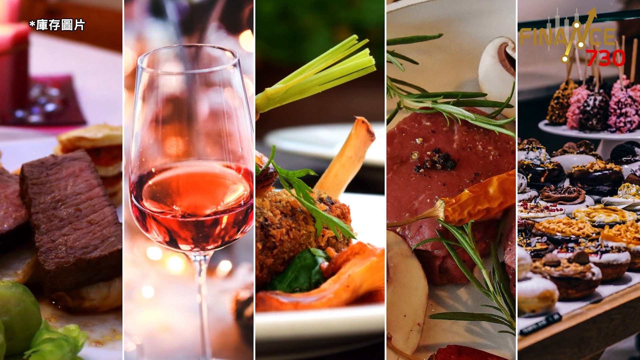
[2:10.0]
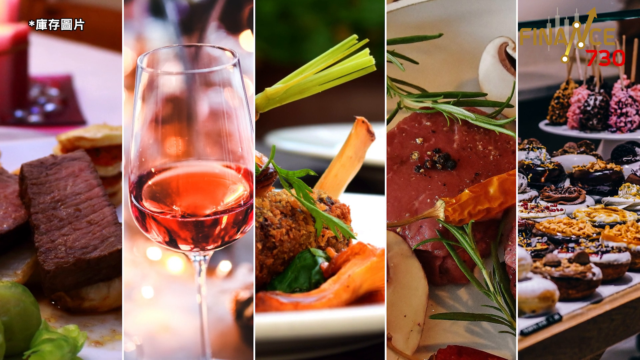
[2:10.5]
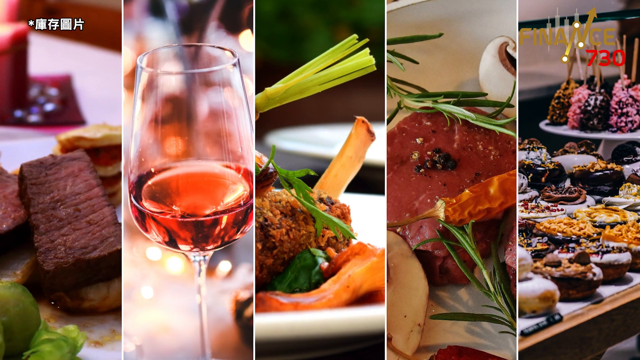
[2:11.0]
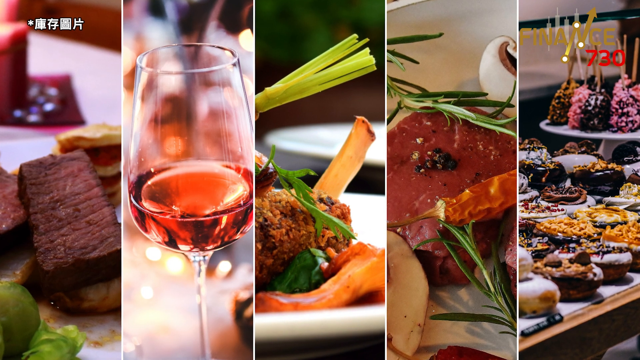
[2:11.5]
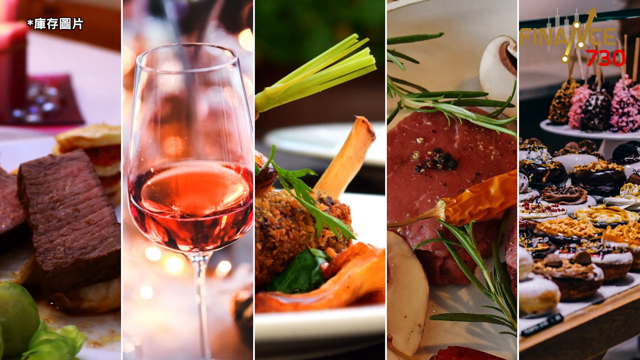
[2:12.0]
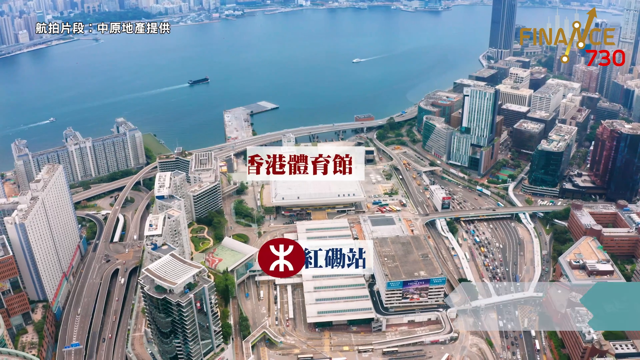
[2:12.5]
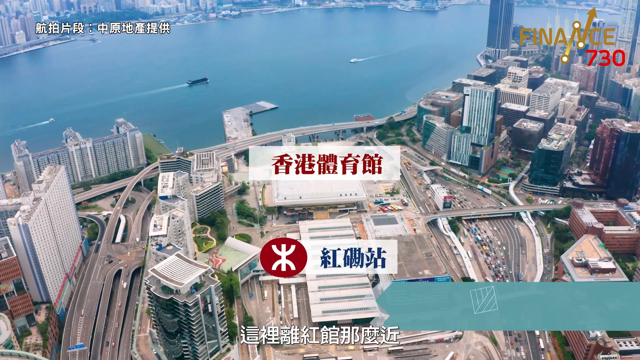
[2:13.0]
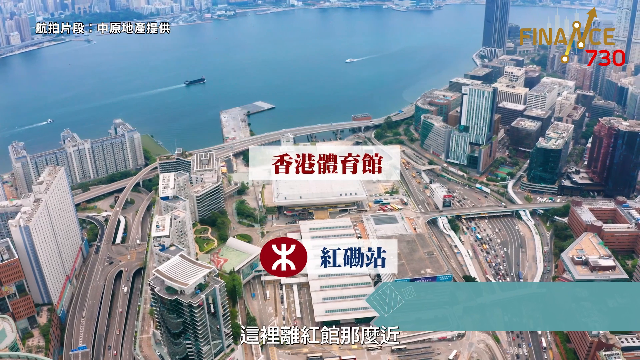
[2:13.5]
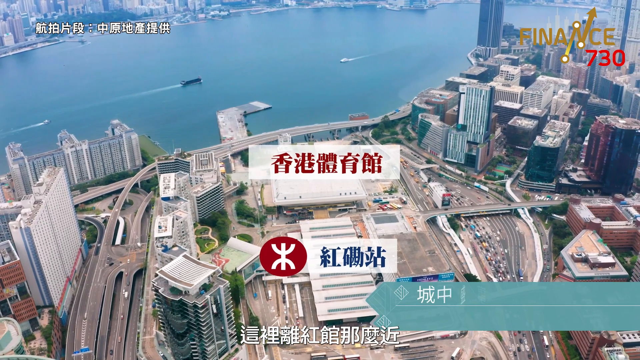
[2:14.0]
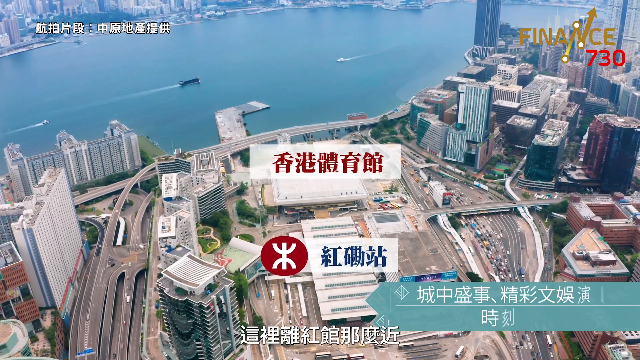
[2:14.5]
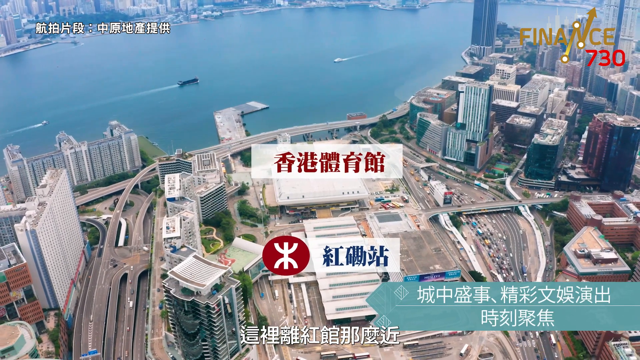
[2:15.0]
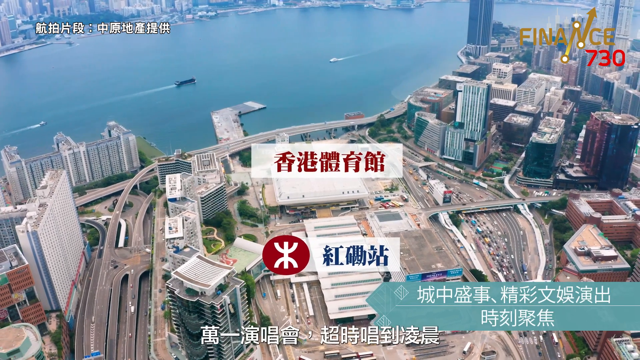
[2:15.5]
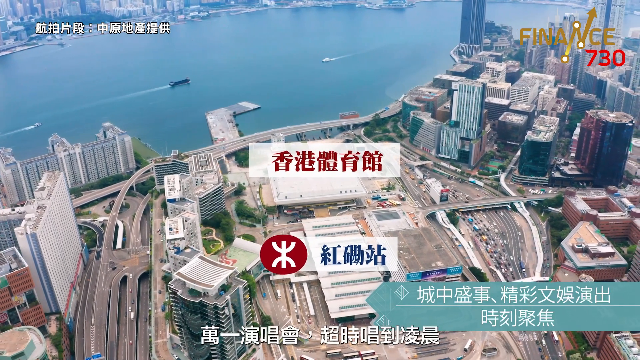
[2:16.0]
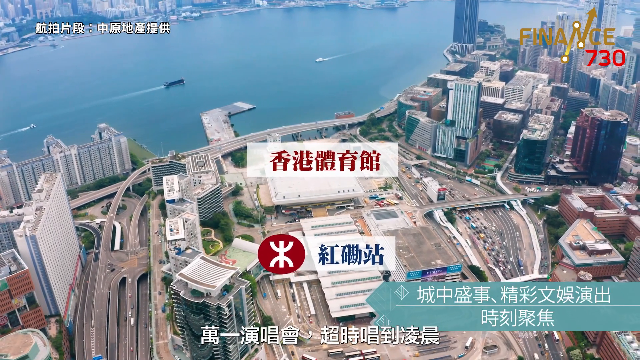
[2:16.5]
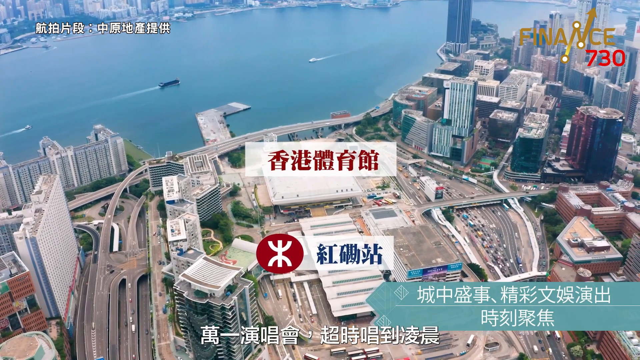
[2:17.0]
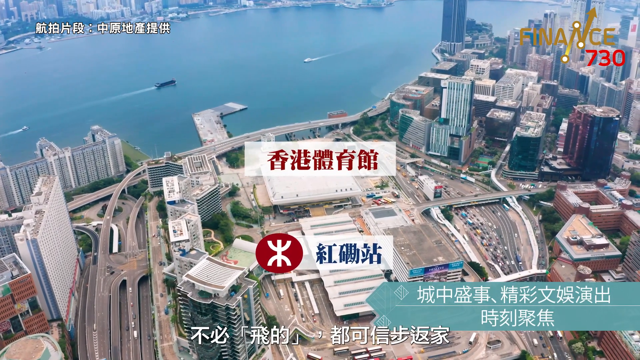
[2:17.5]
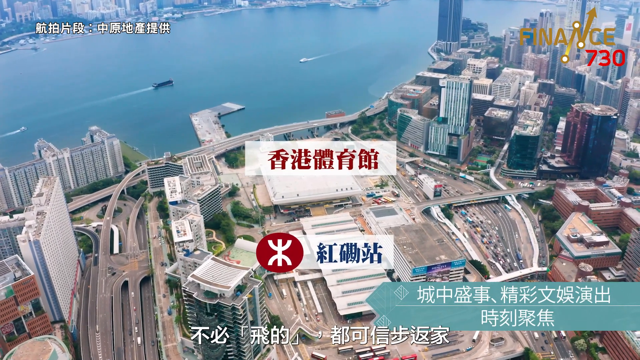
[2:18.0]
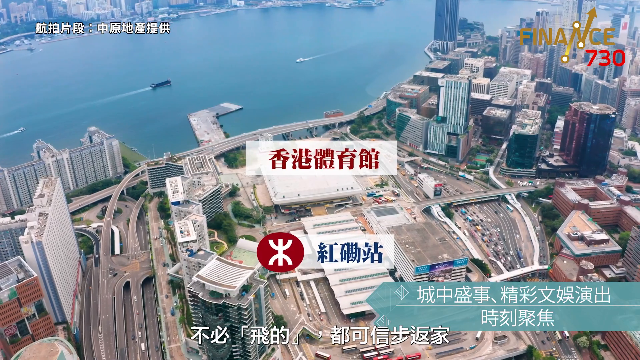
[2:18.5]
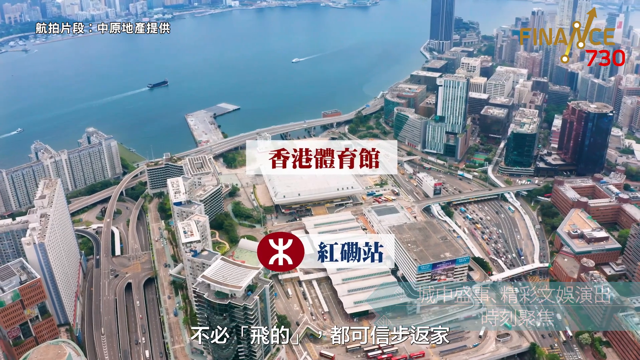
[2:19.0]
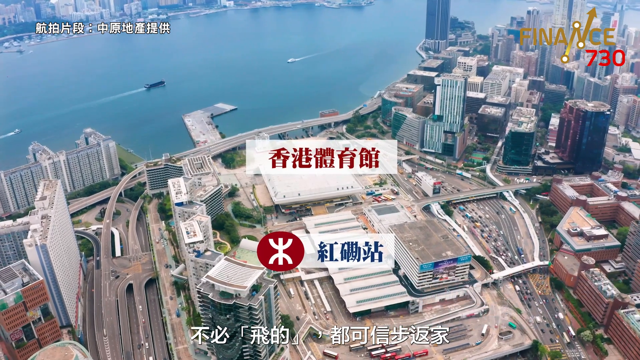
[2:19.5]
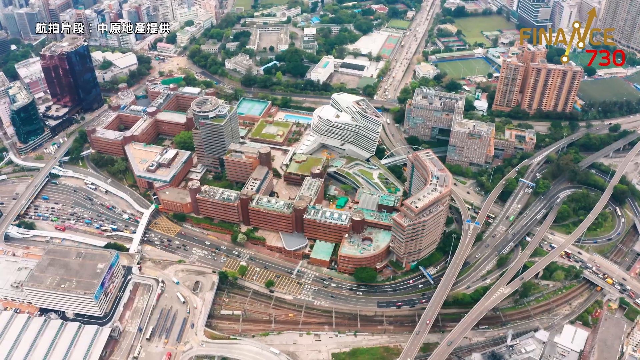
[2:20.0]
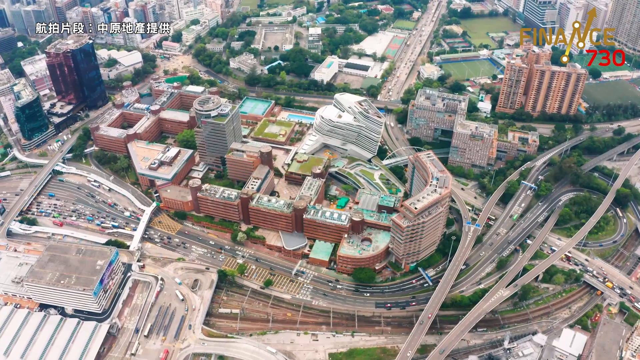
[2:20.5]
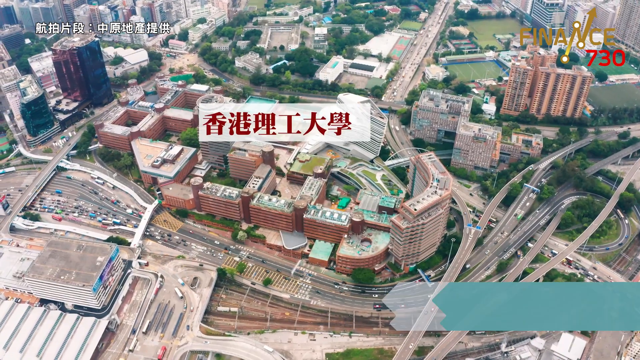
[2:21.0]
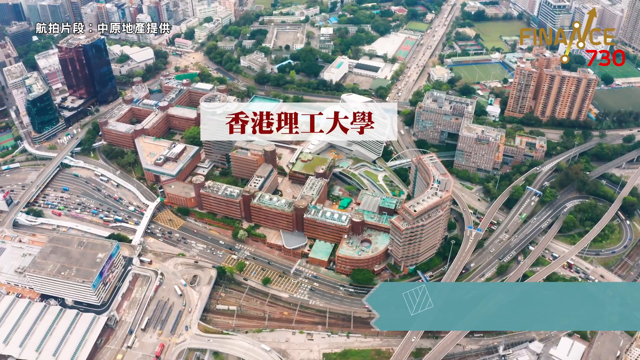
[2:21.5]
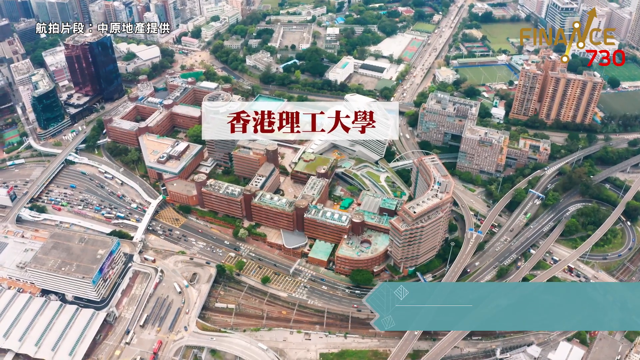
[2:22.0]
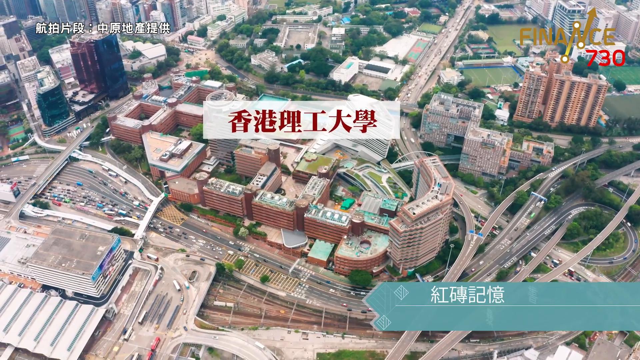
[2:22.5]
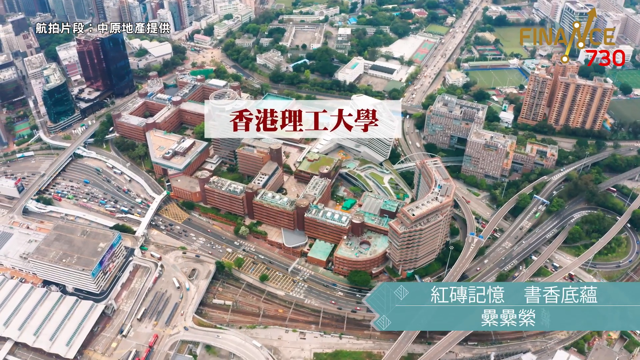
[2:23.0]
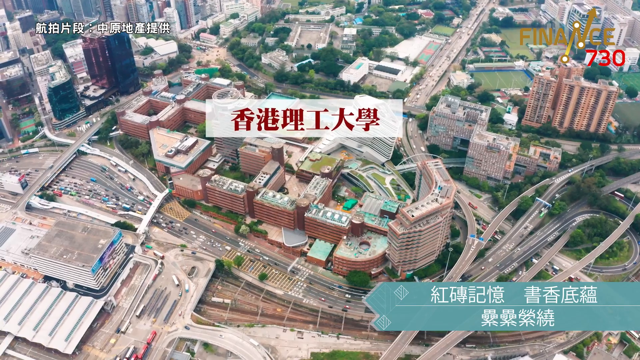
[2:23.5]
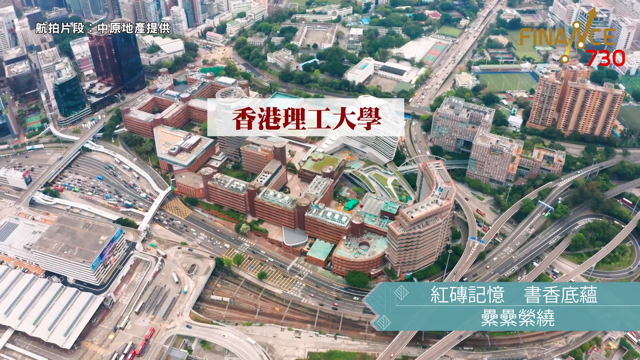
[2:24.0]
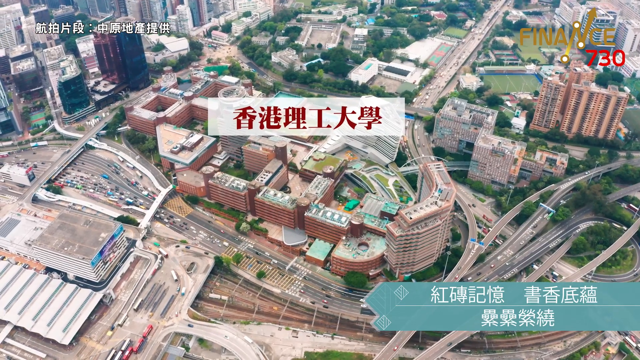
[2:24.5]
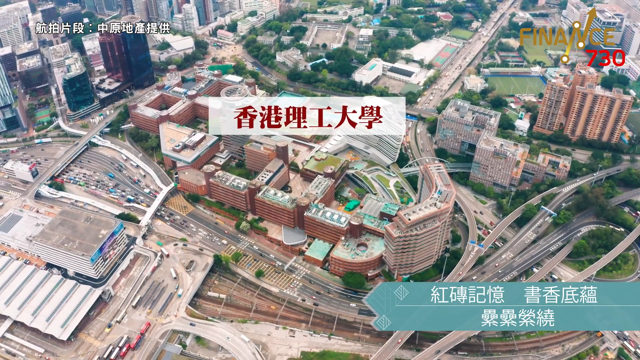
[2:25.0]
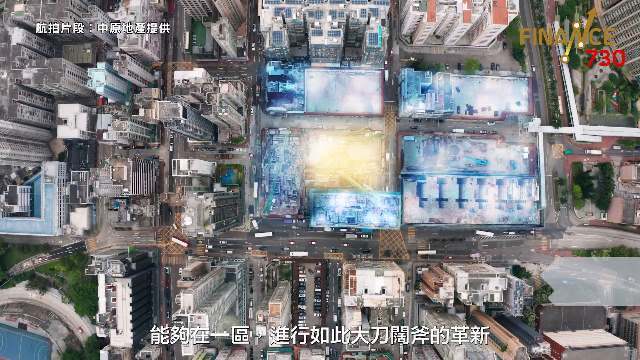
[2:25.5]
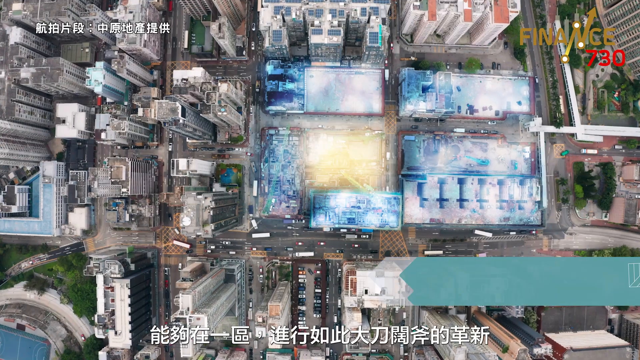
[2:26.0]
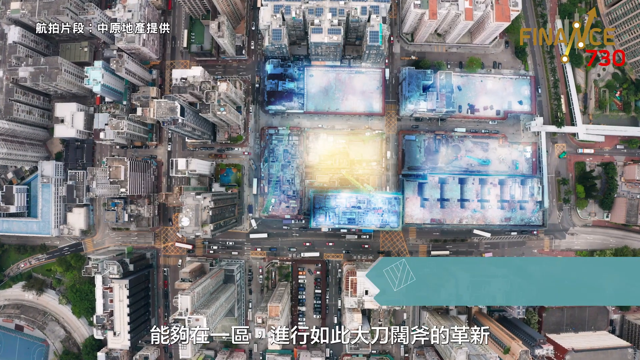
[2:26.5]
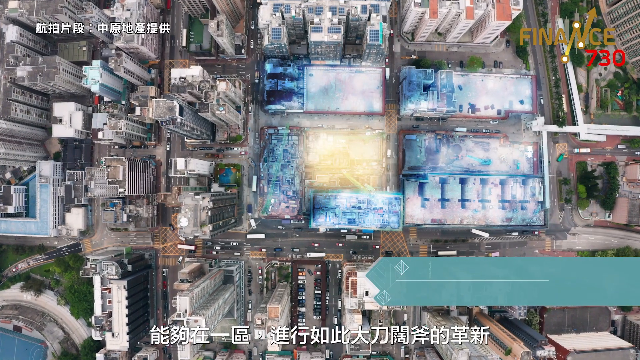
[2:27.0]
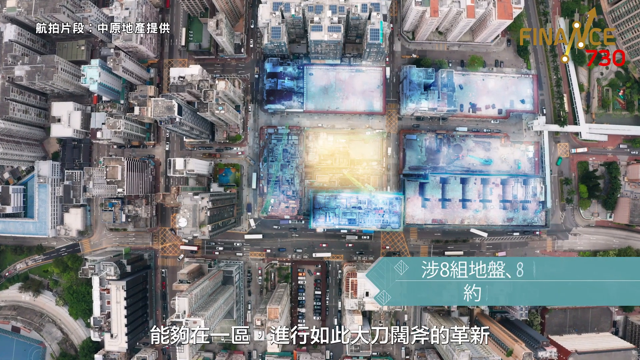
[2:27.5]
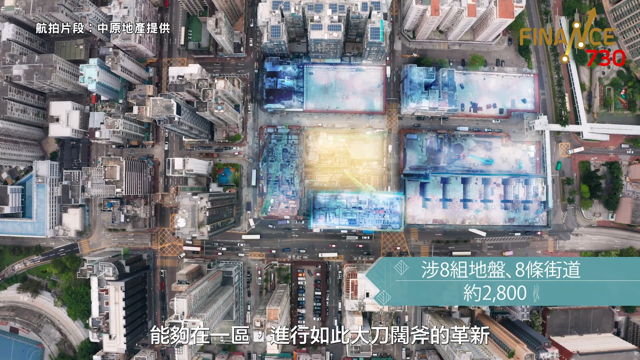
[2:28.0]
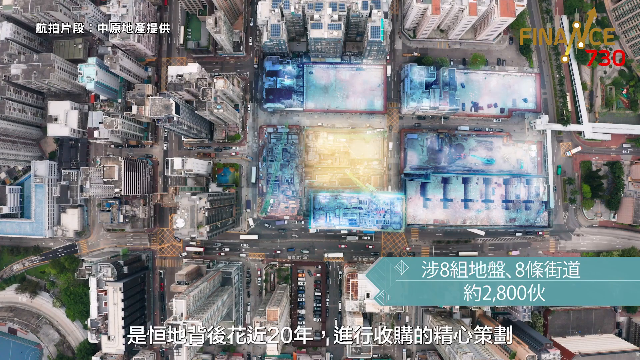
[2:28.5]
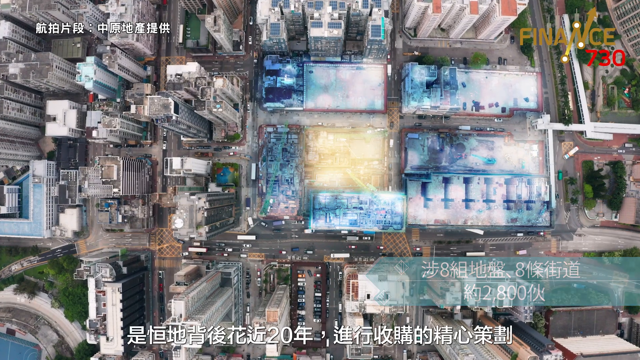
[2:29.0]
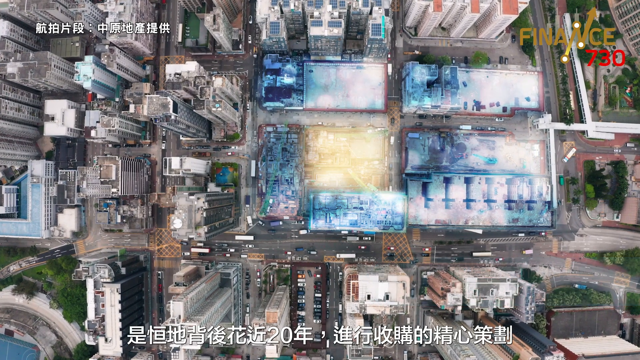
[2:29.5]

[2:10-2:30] An aerial view, almost like a drone flying over, shows the city, apparently Hong Kong, with highways and cars moving on them. A building is highlighted, apparently the Baker Circle being advertised, and the overhead view shows how close it is to the roadways and to the waterway. Banners with unreadable writing run across the top, and there is a "Finance 730" logo at the top. The buildings are highlighted from above; they look like apartment buildings, maybe with dual use such as restaurants inside. They look to take up a fairly large area of land and to be very tall high-rises.